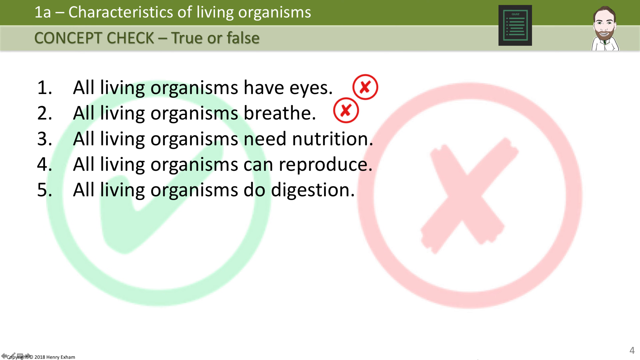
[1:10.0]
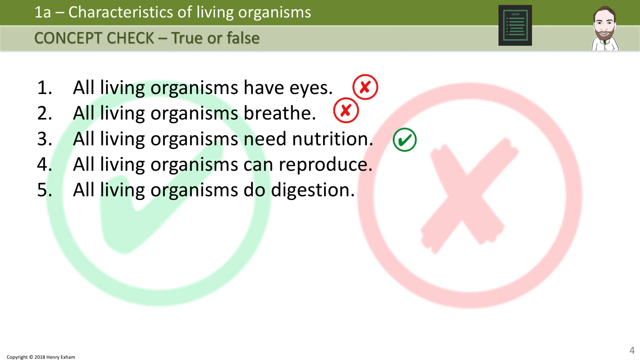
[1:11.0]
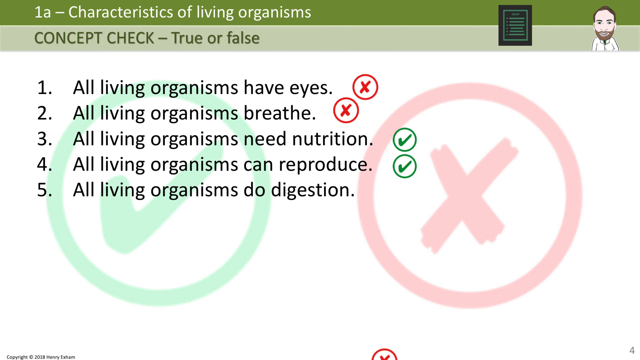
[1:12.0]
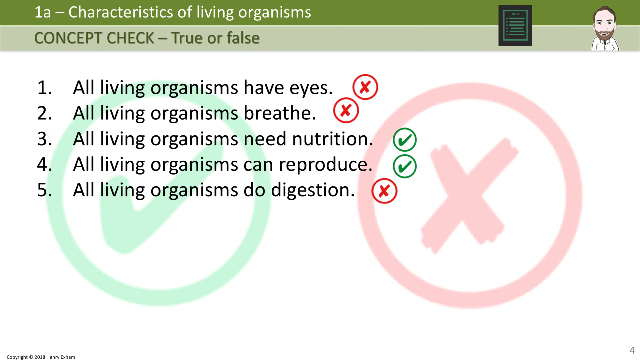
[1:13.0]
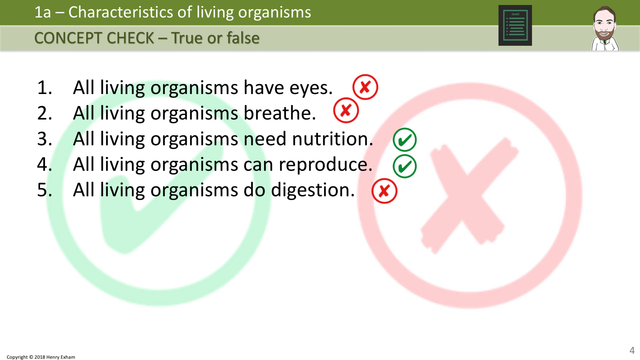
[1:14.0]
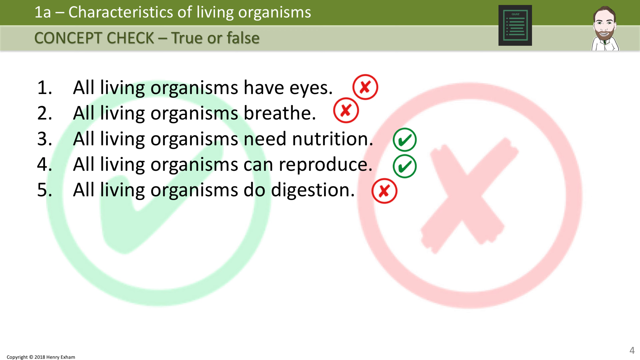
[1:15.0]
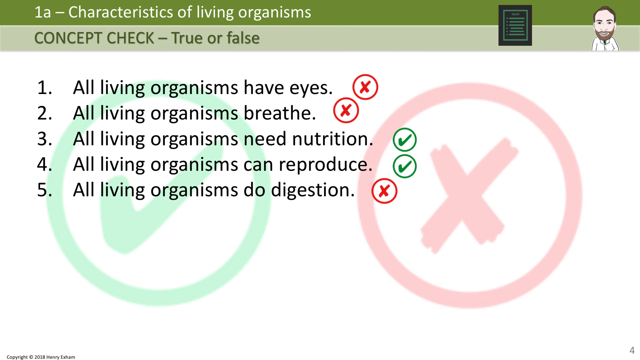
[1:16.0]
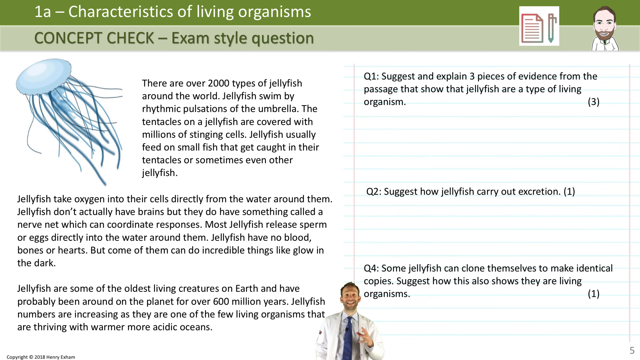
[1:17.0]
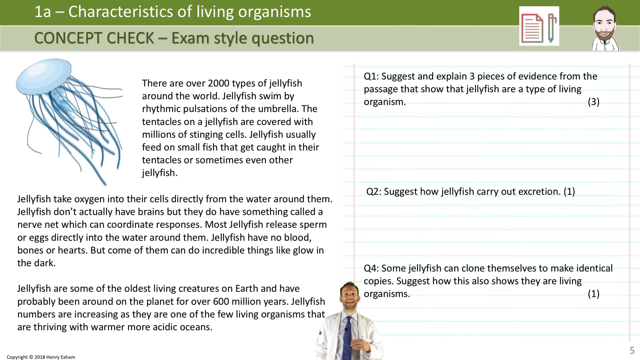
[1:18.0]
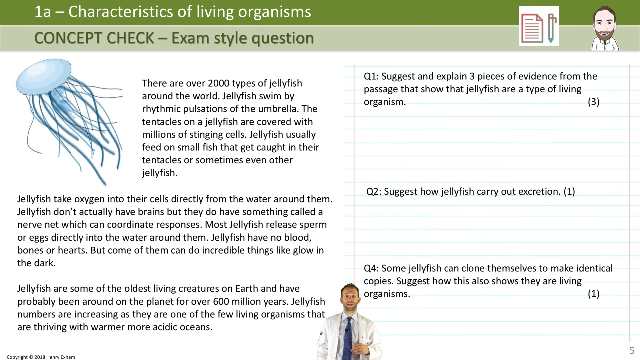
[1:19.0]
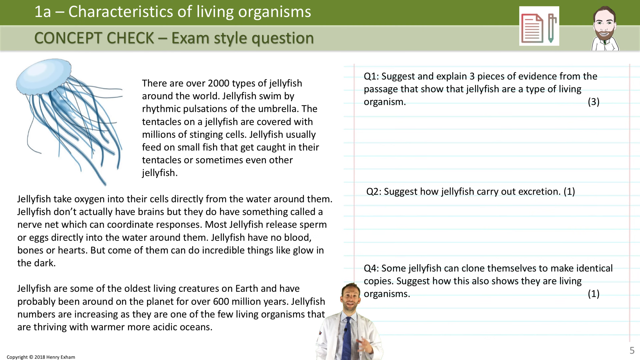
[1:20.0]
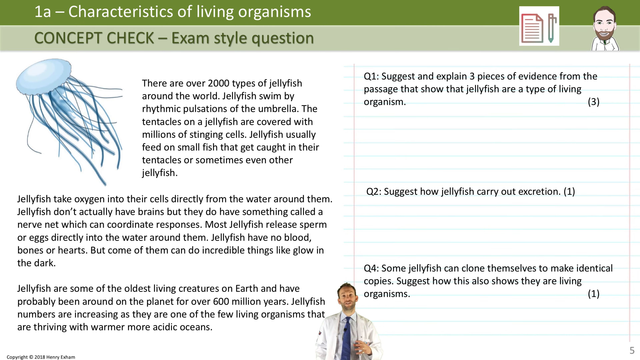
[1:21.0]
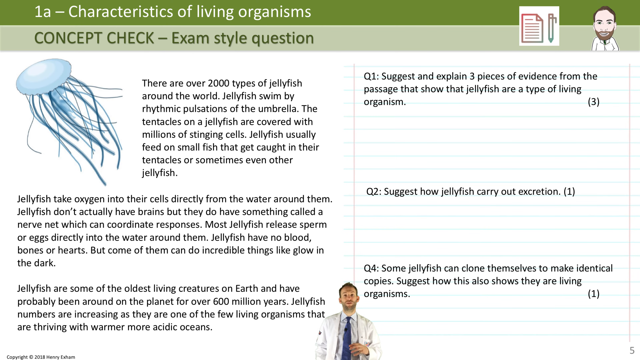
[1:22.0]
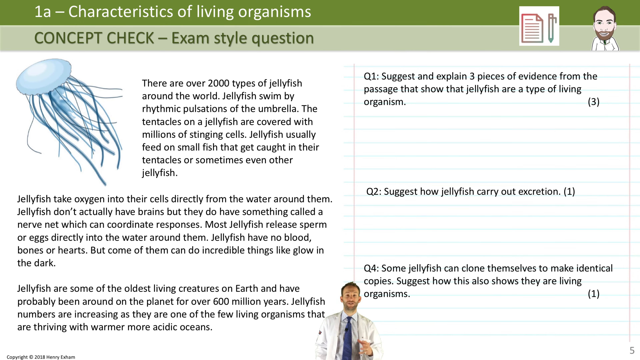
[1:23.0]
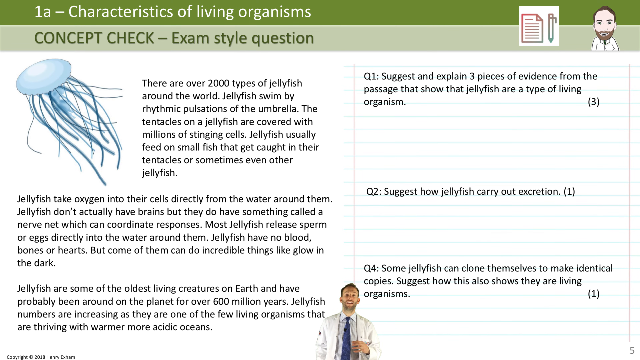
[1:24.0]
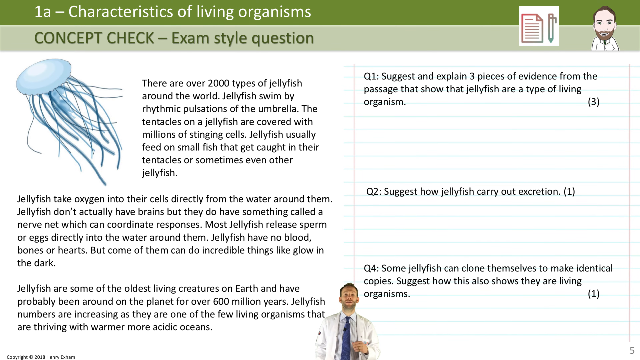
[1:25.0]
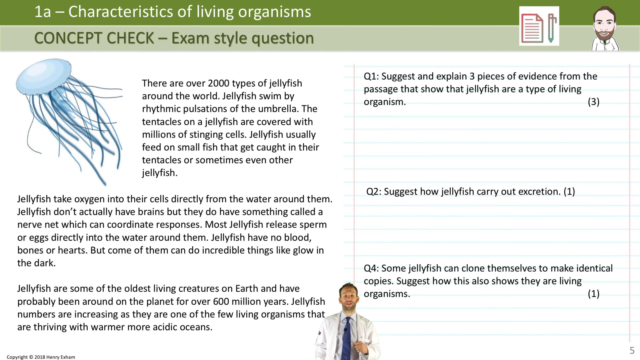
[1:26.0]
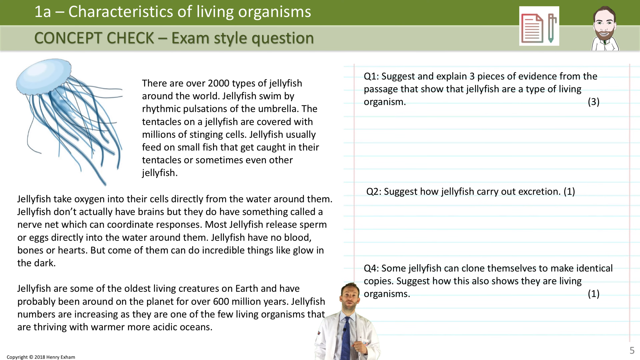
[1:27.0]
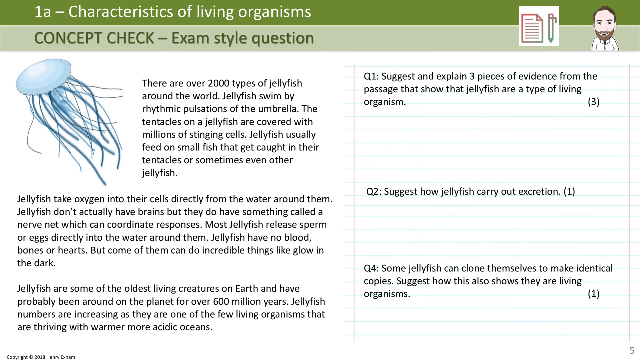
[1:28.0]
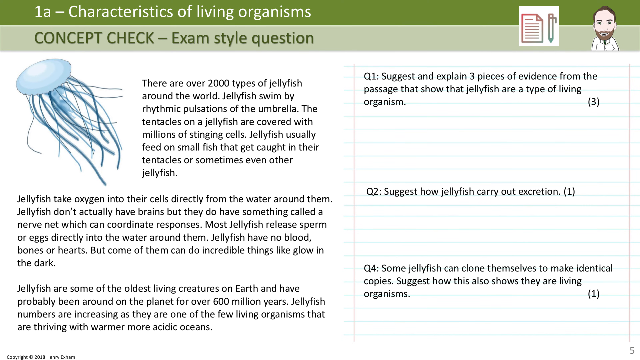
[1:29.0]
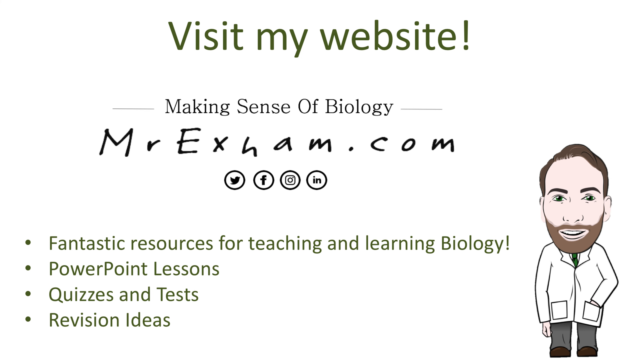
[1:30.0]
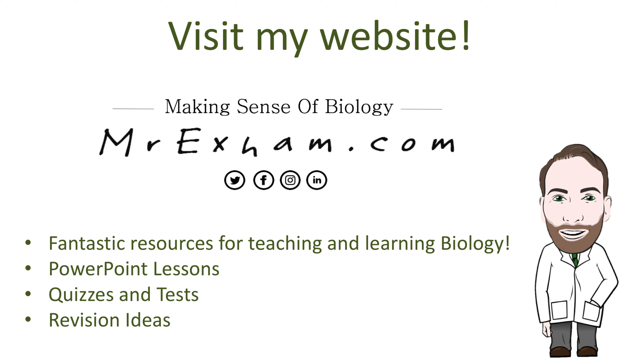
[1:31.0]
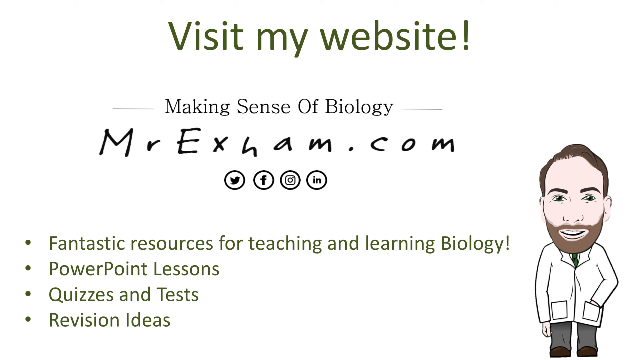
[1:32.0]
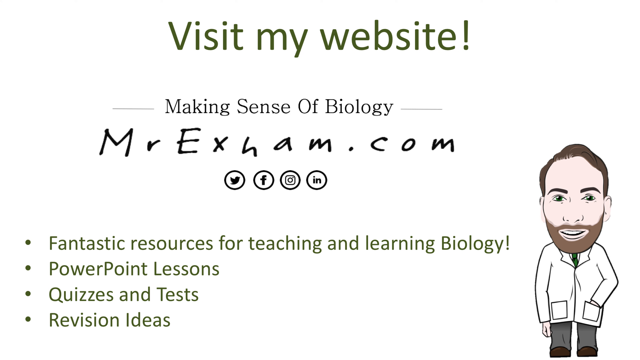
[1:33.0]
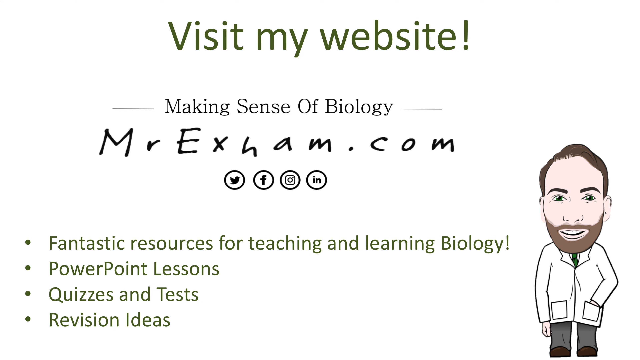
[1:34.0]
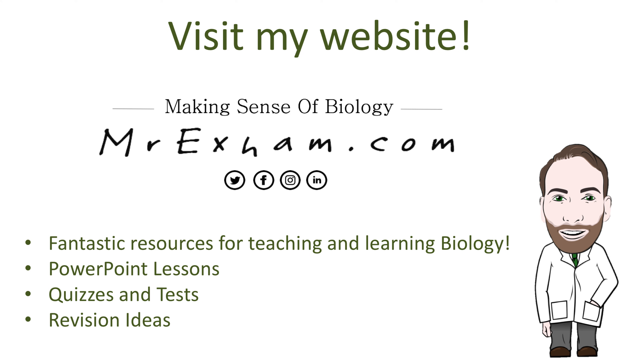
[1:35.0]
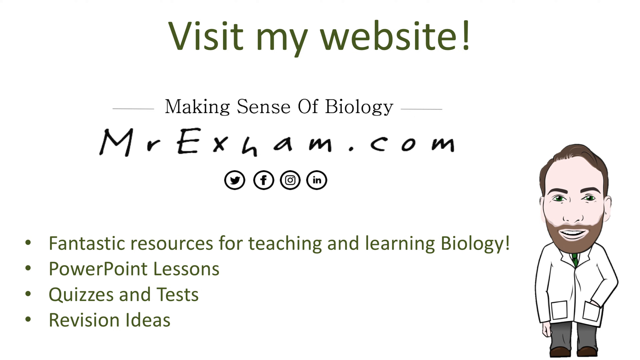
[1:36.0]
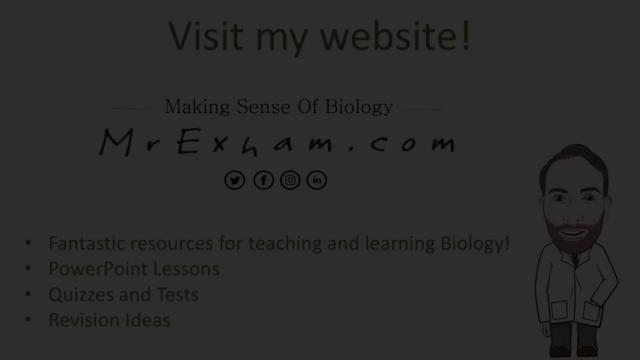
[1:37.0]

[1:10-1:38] The background is still white, with the five points of text on screen and X's beside the first two. From the bottom of the screen, a green check mark with a circle around it appears and rises to the third point, then another rises to the fourth point, and a red X with a circle around it rises to the fifth point. The scientist suddenly appears at the bottom of the screen, now quite small. The scene transitions to a white background titled "Concept Check, Exam-Style Question". A blue jellyfish is in the upper left, with a paragraph about jellyfish. To the right are questions on a background that looks like a piece of lined paper. The scientist at the bottom of the screen continues to talk, then moves slightly to the right and disappears. The scene transitions to an end slide prompting viewers to visit his website, showing the website name, social media icons and some bullet points, with a cartoon of the scientist standing in the bottom right. The video fades and ends.